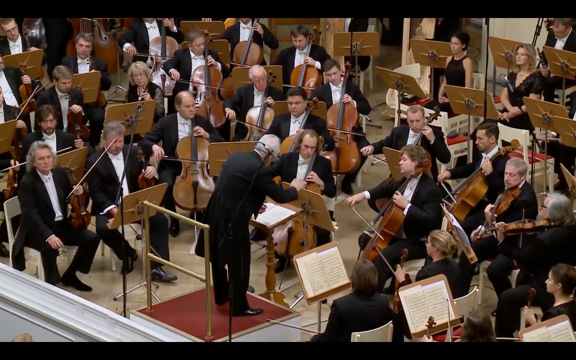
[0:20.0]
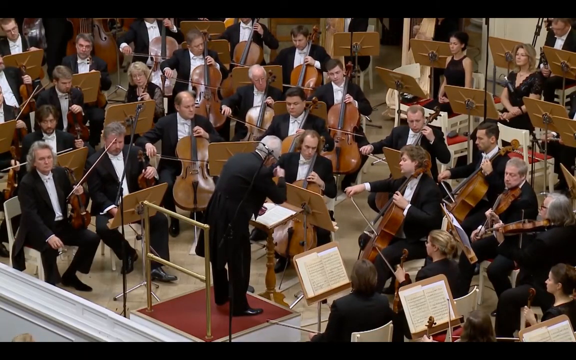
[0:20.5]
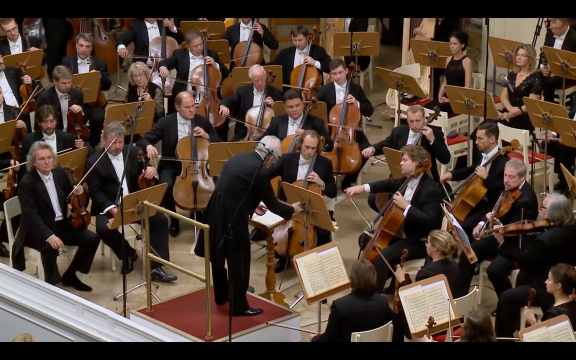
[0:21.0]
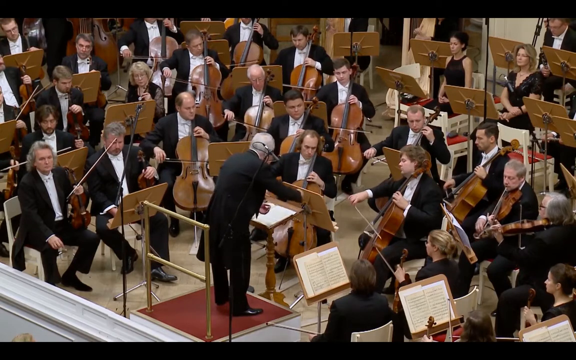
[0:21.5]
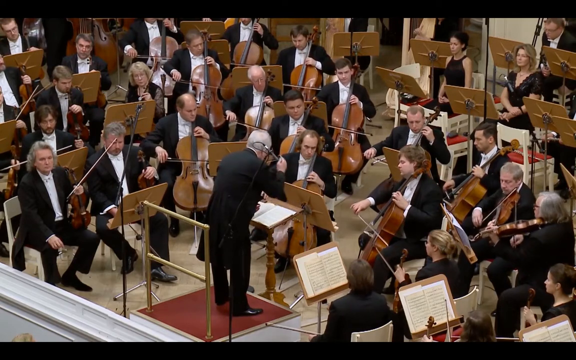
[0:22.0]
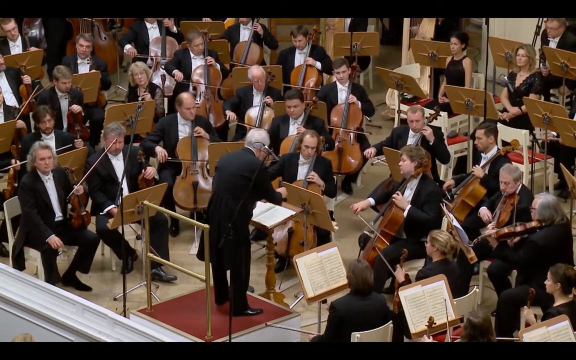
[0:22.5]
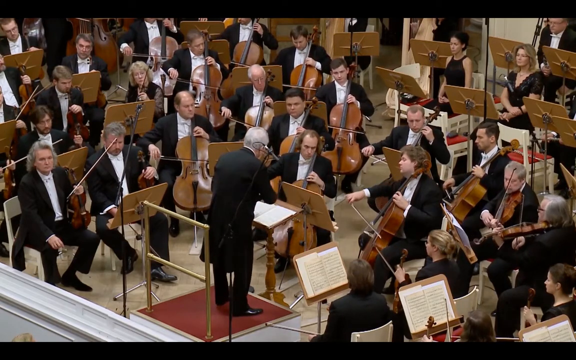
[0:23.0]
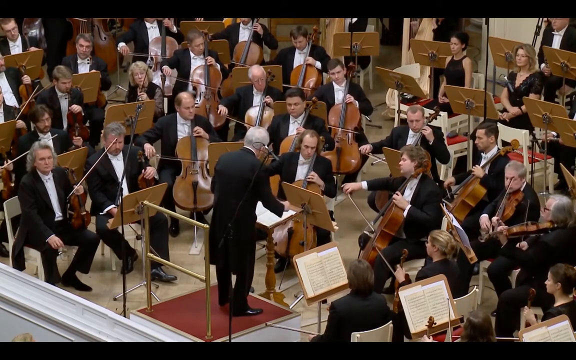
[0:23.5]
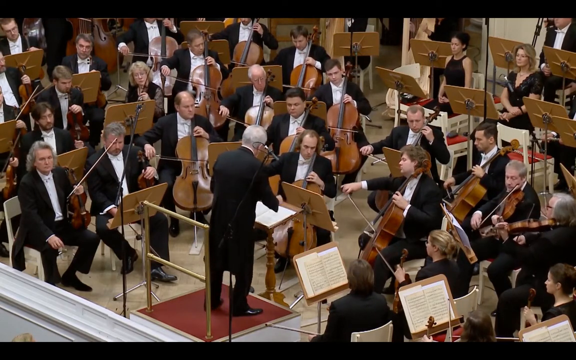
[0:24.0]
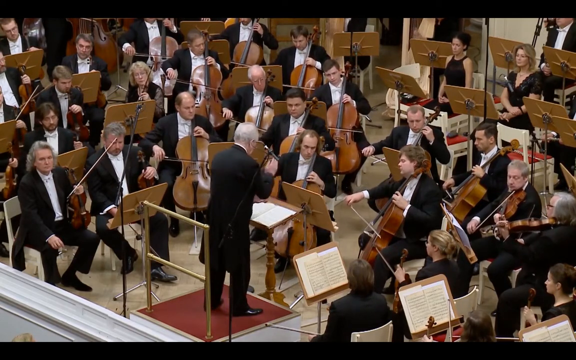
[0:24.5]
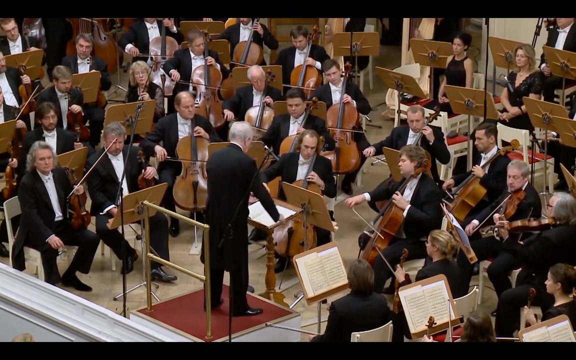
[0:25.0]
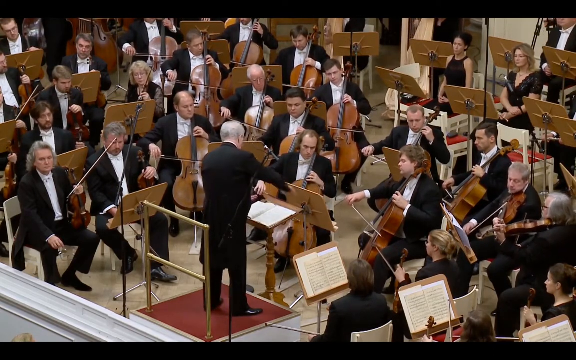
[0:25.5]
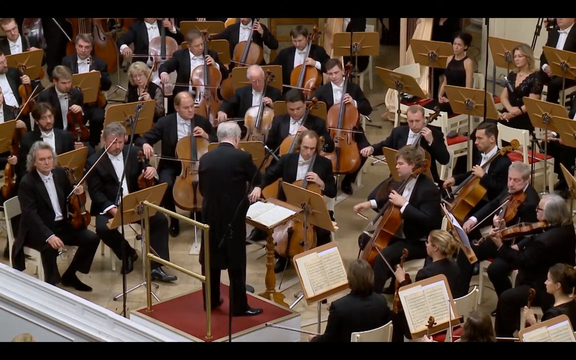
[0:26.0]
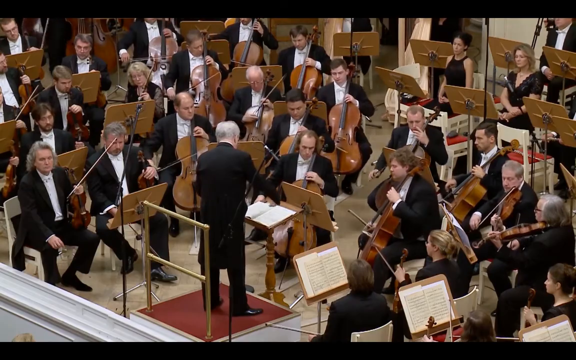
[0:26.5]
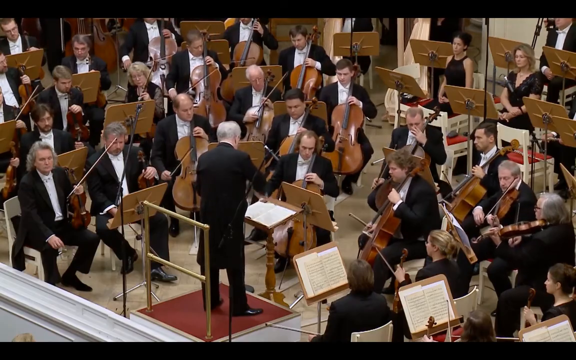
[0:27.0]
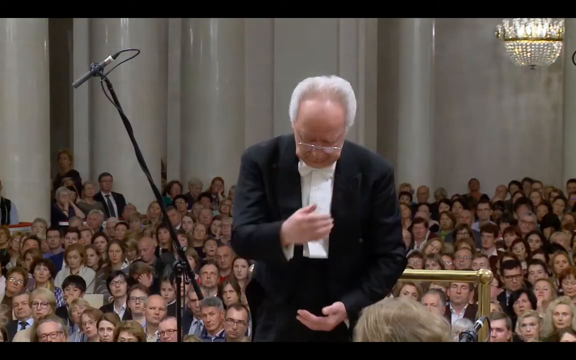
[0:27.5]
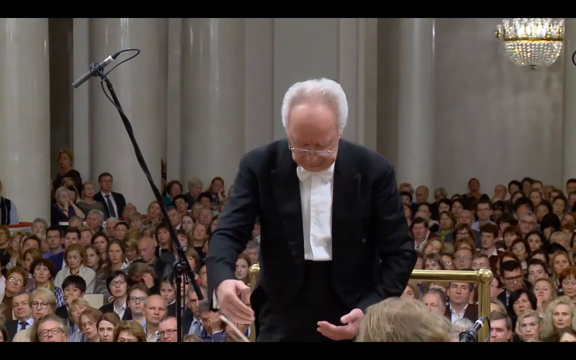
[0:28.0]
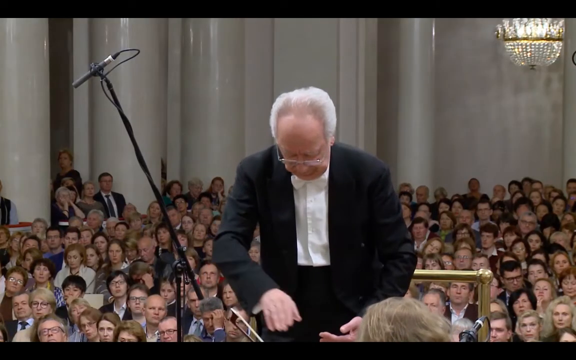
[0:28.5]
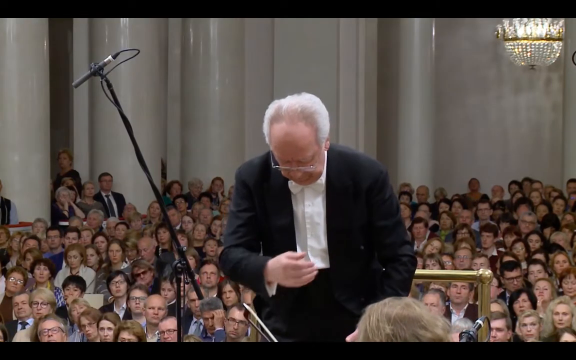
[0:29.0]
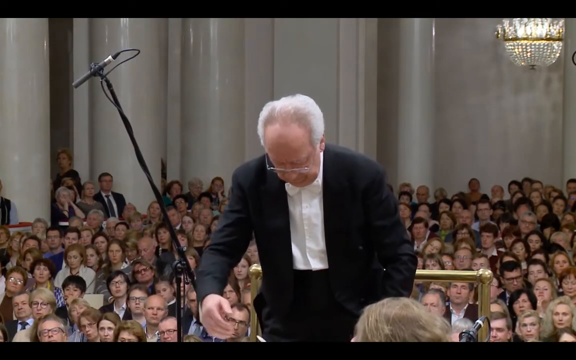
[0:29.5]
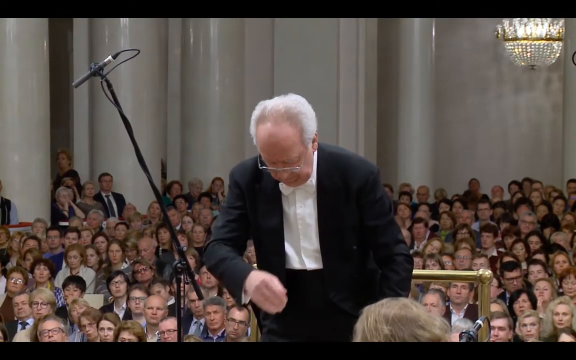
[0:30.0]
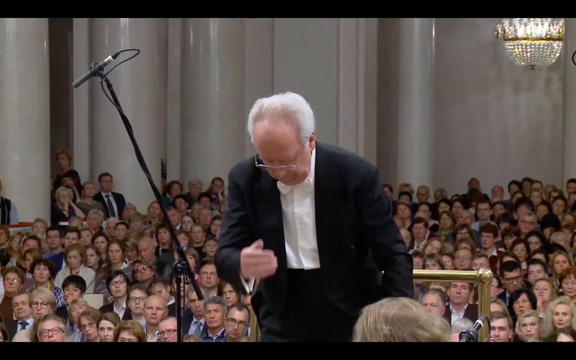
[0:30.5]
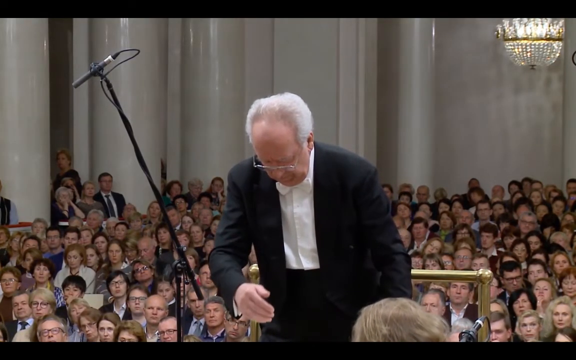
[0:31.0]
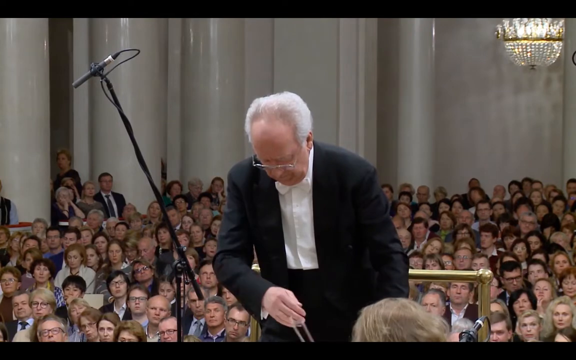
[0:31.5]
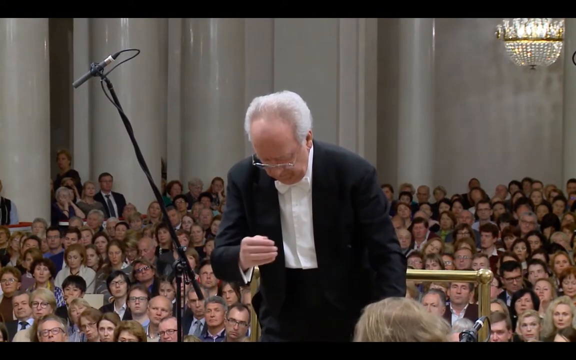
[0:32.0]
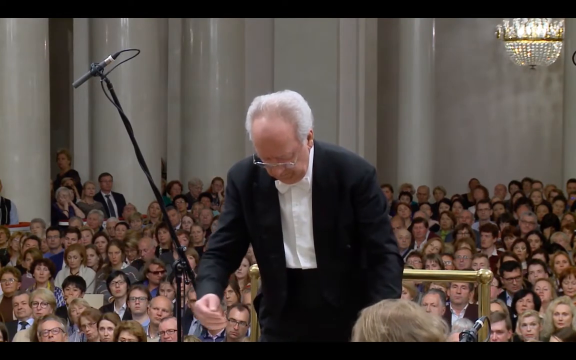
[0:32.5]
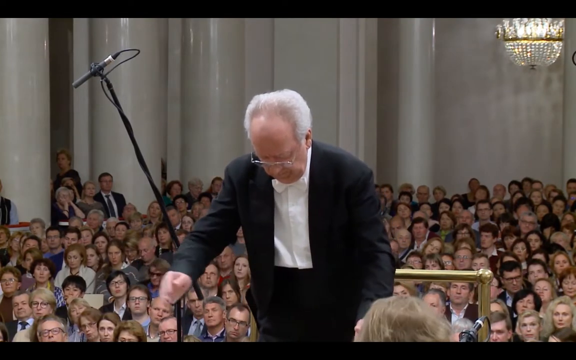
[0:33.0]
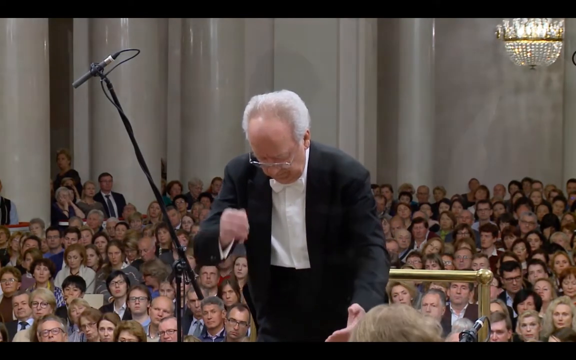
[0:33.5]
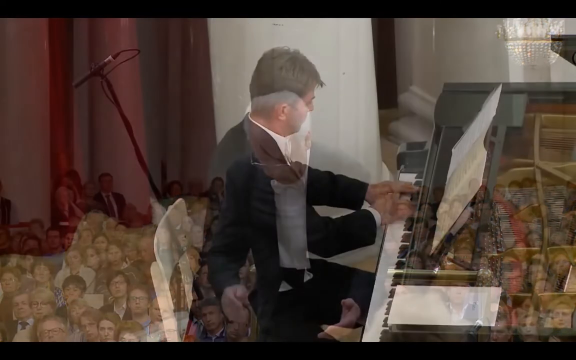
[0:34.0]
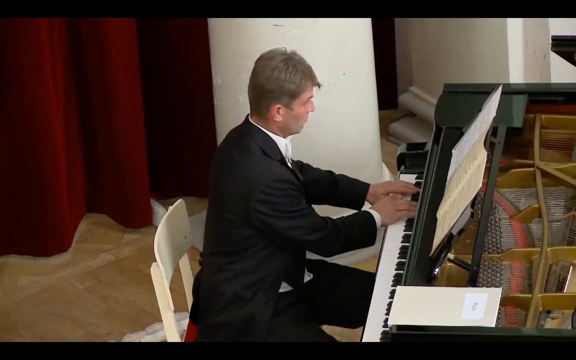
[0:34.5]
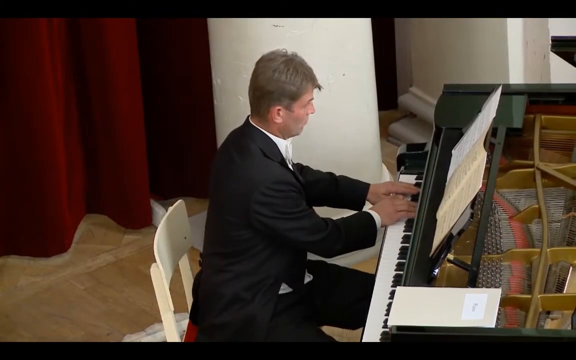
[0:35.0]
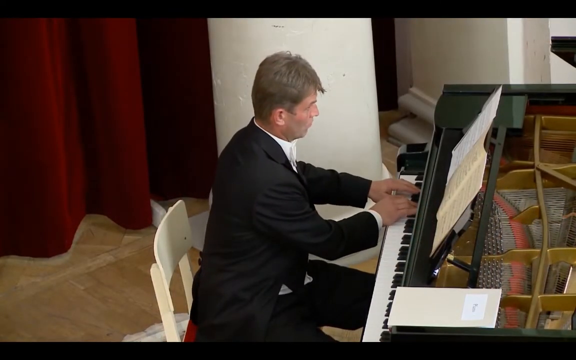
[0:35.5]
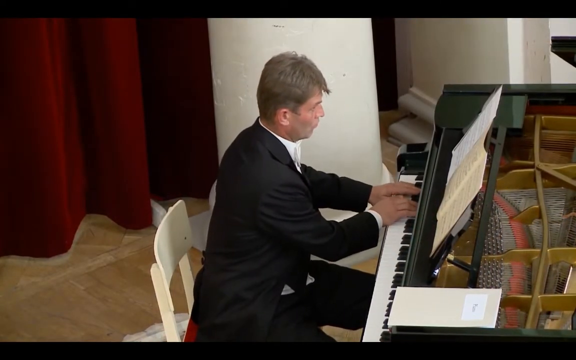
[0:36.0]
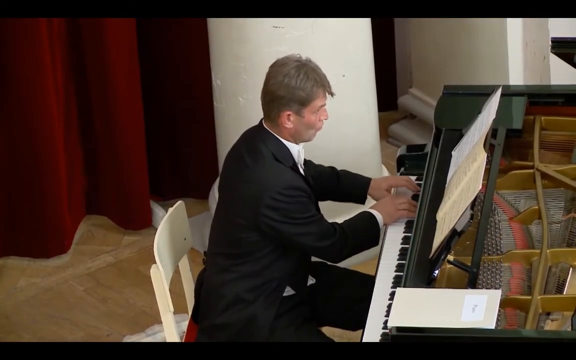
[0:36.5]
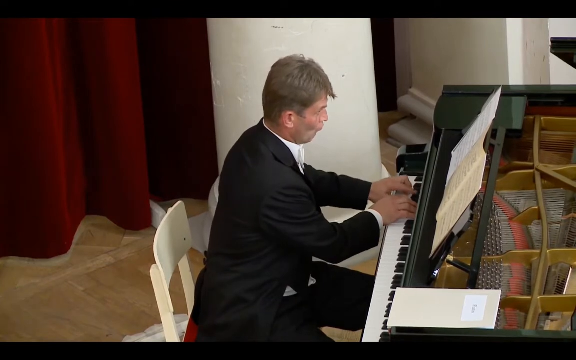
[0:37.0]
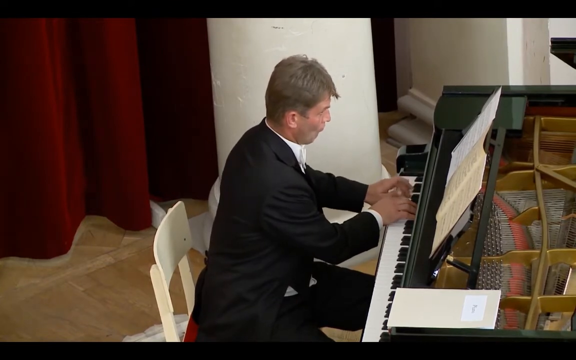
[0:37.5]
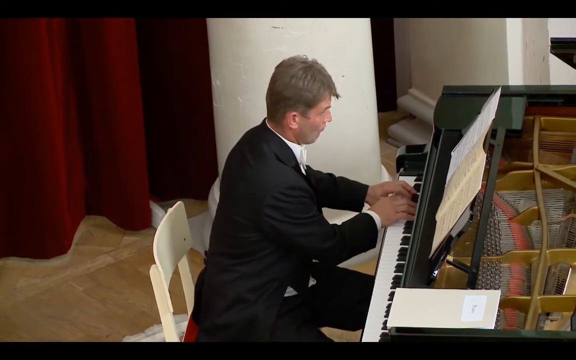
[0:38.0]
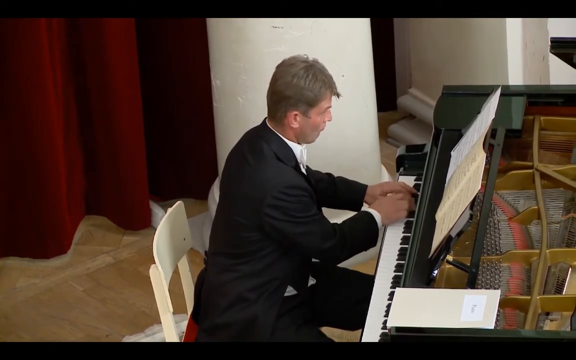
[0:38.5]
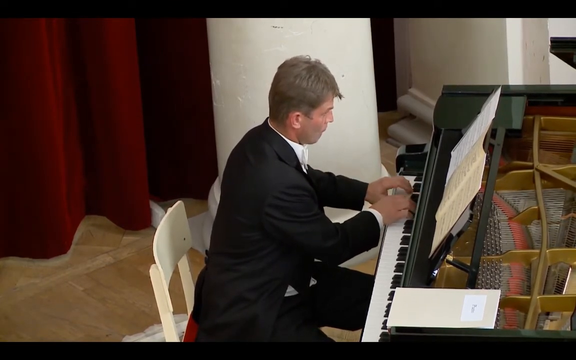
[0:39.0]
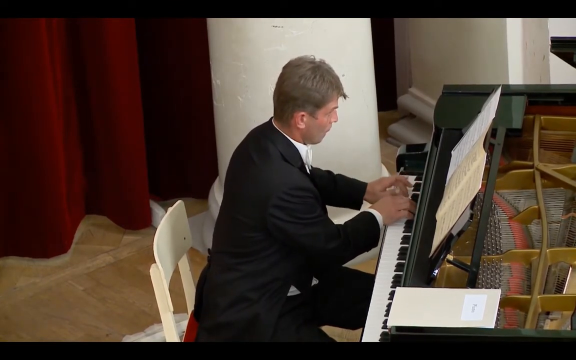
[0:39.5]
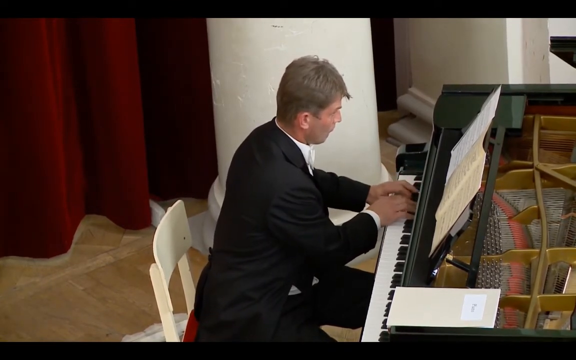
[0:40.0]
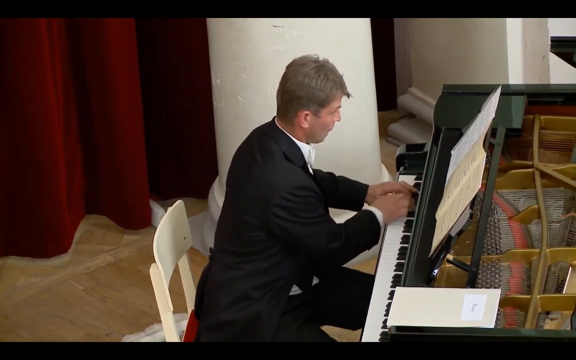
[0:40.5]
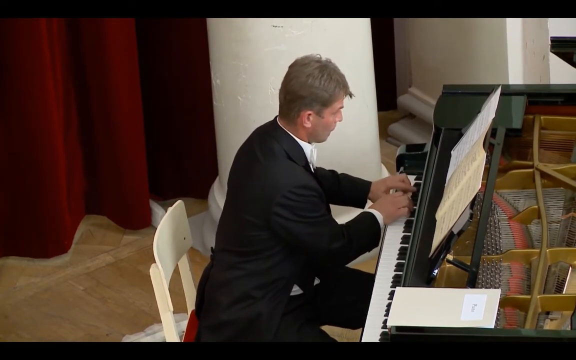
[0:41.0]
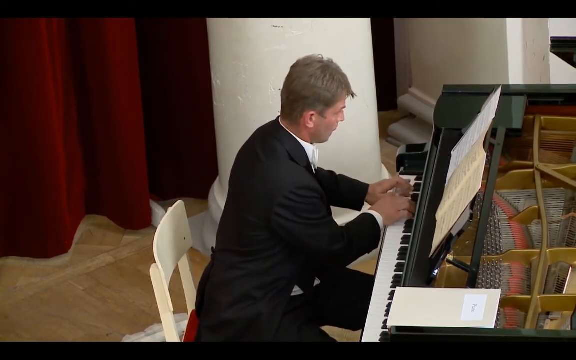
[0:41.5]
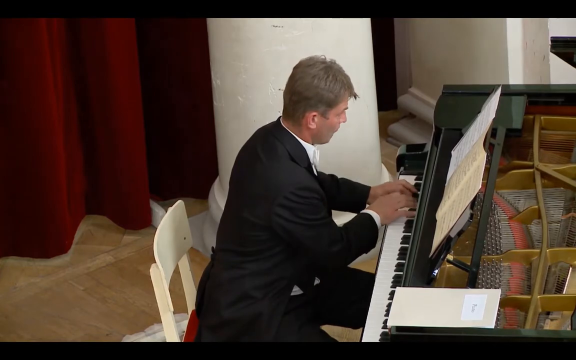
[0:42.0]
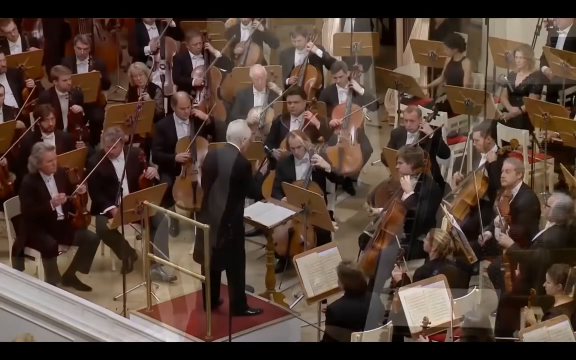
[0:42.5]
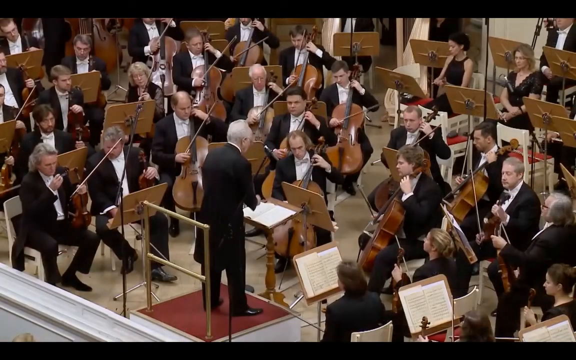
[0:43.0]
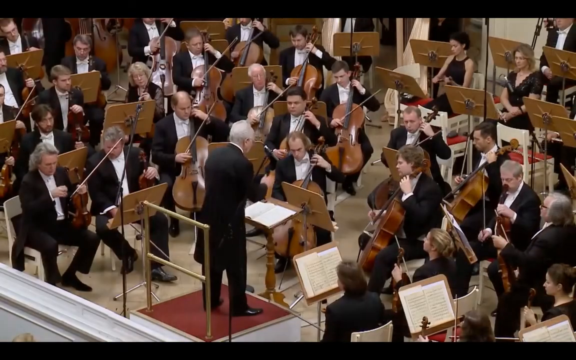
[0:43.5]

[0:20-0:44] The conductor is seen from behind, facing a semicircle of string players, mostly cellists or violinists, in around four rows around him. He faces toward the right, conducting with his right hand while looking down at a music stand. Everyone wears suits. The scene then changes to face the conductor directly, so he faces the camera, though he looks down at his music sheet as he conducts with his right hand. Behind him is a crowd of around 50 heads, a white wall, and some columns, and a chandelier is visible; the venue looks very elaborate and high-class. The scene then changes to a man playing a grand piano, seen from the side, showing the side of the piano and the side of the man. He wears a black suit, looks at his music sheet, and plays at the lower end of the keys. The scene then changes back to the view from behind the conductor facing the semicircle of violinists and cellists, who are all playing, and the scene ends there.